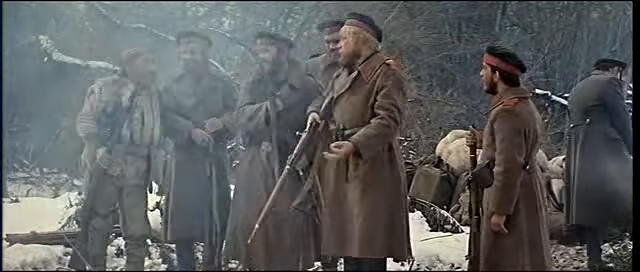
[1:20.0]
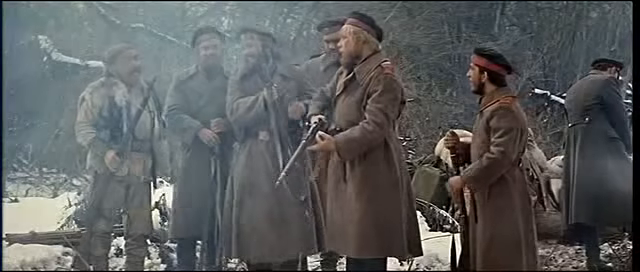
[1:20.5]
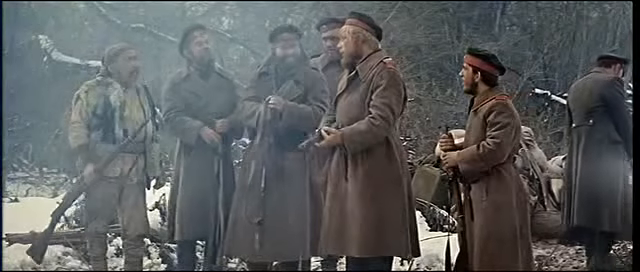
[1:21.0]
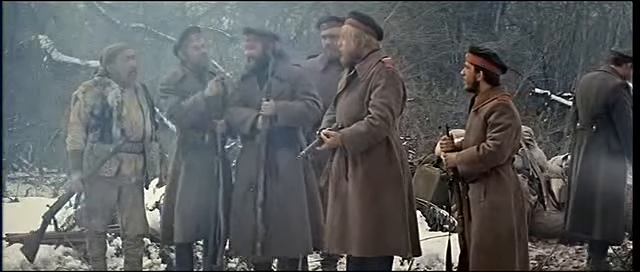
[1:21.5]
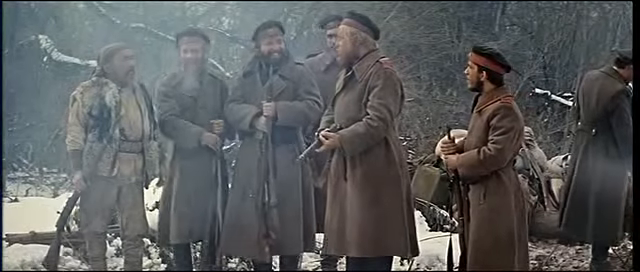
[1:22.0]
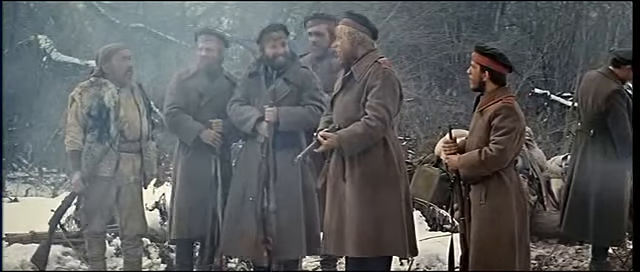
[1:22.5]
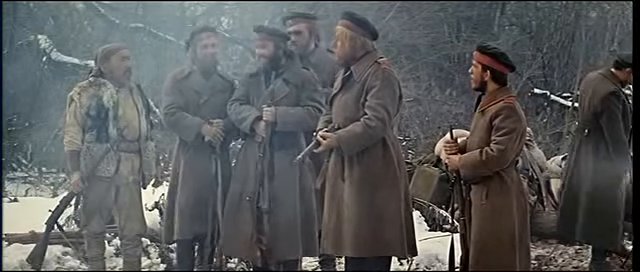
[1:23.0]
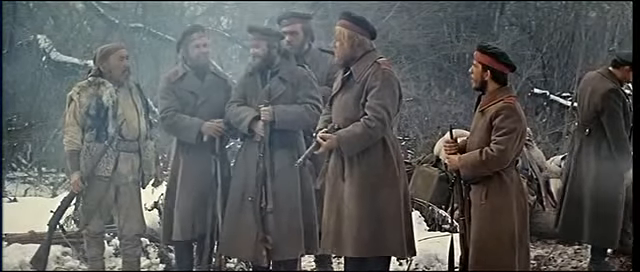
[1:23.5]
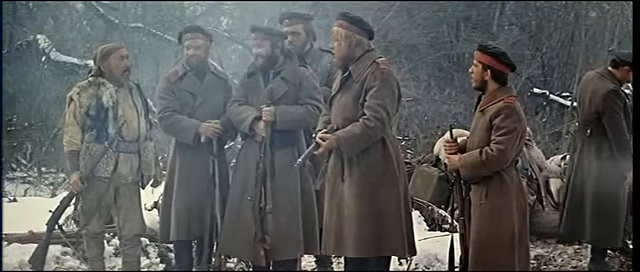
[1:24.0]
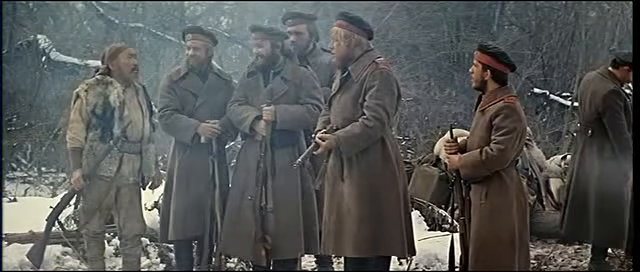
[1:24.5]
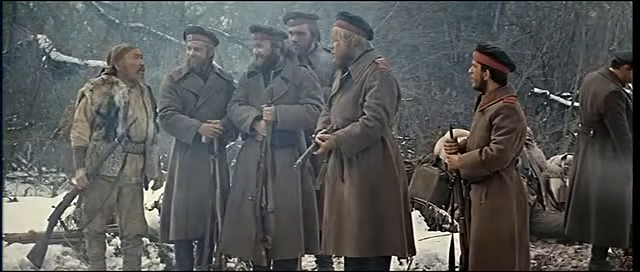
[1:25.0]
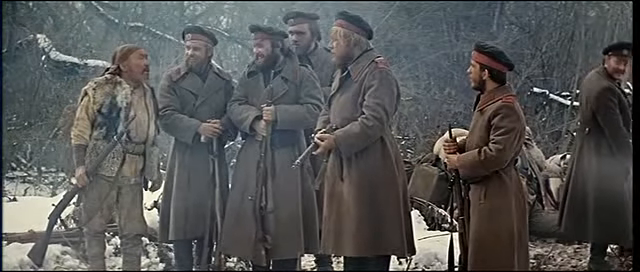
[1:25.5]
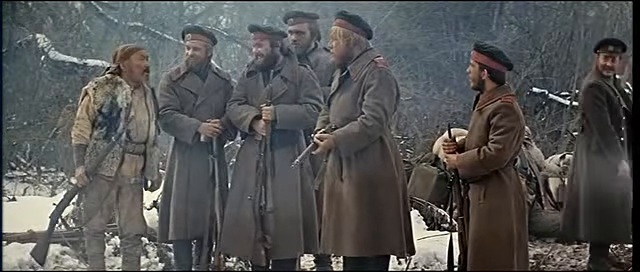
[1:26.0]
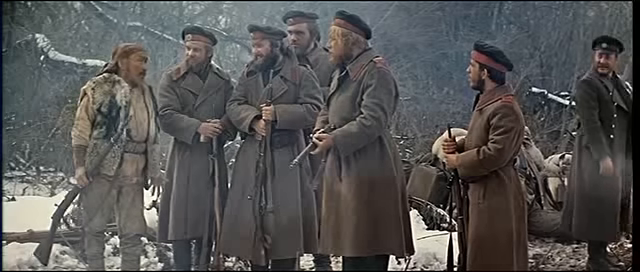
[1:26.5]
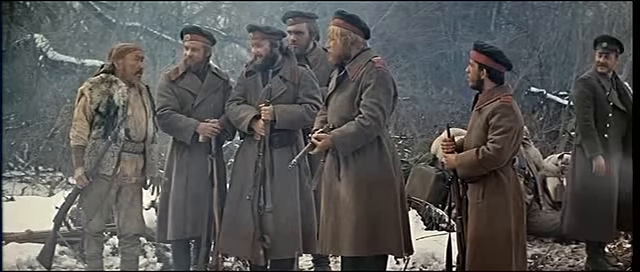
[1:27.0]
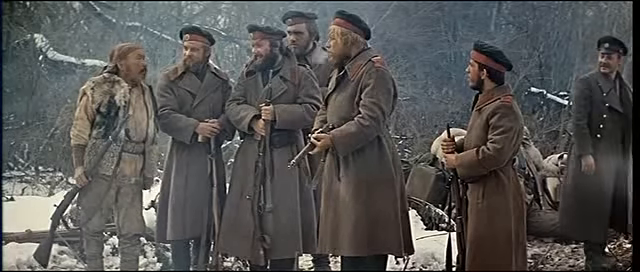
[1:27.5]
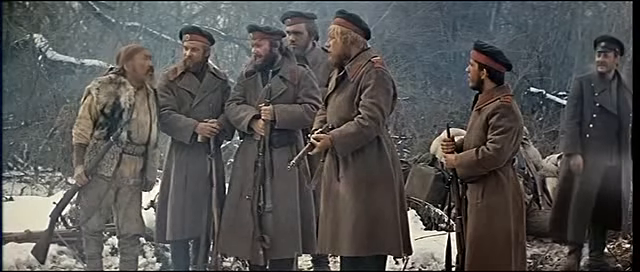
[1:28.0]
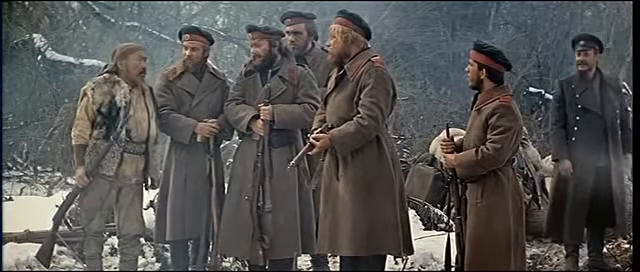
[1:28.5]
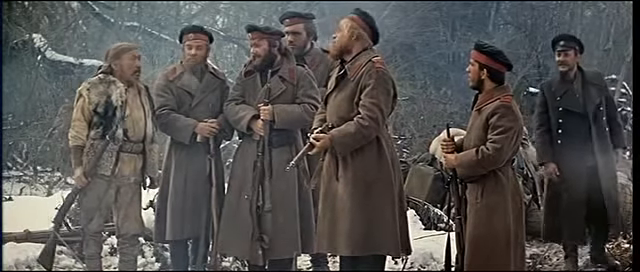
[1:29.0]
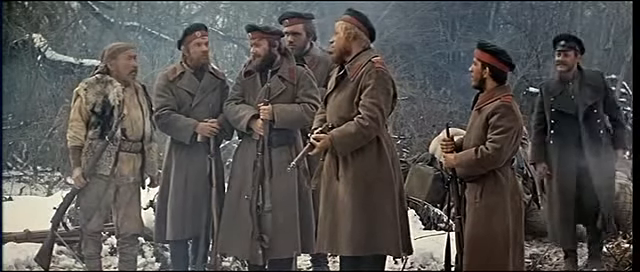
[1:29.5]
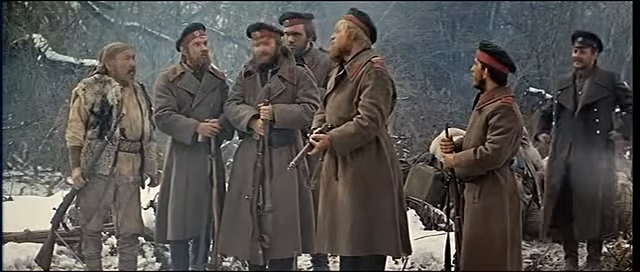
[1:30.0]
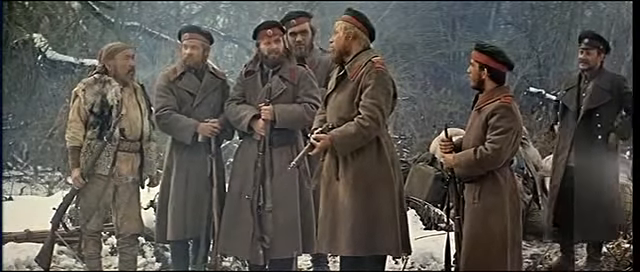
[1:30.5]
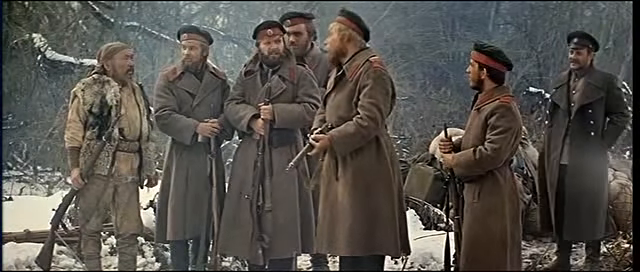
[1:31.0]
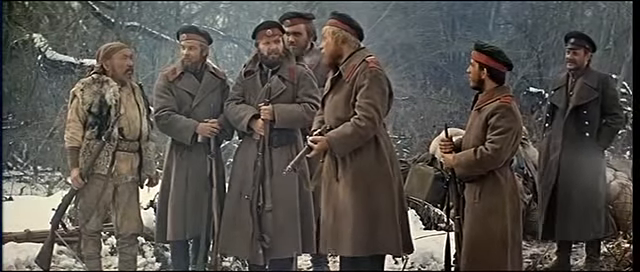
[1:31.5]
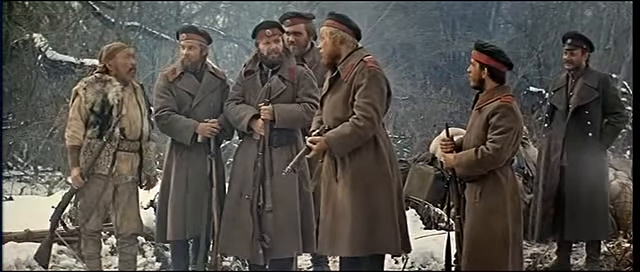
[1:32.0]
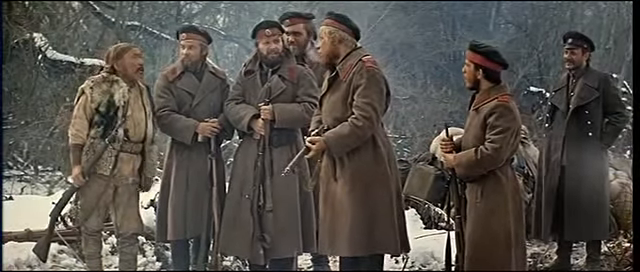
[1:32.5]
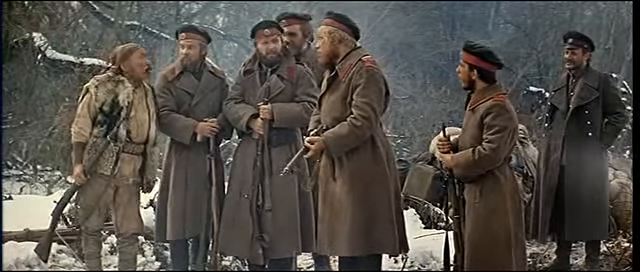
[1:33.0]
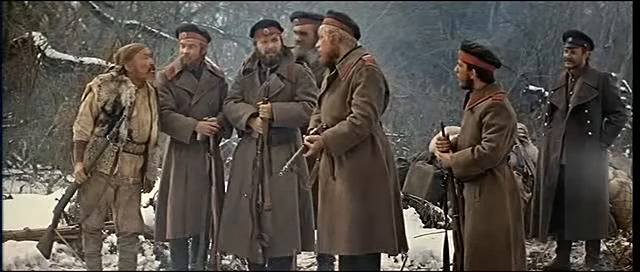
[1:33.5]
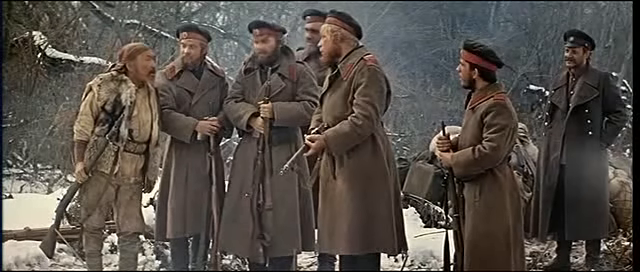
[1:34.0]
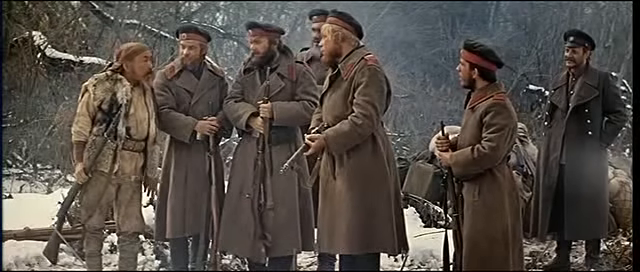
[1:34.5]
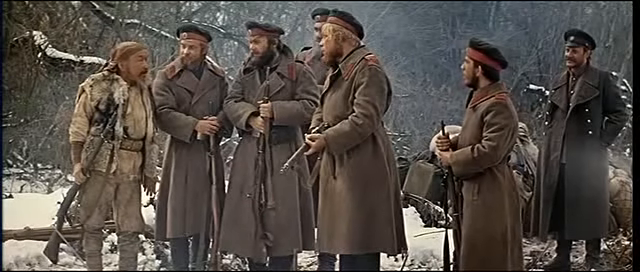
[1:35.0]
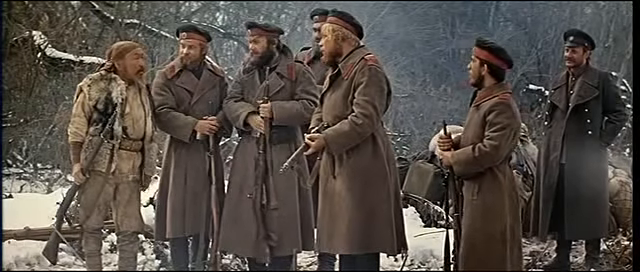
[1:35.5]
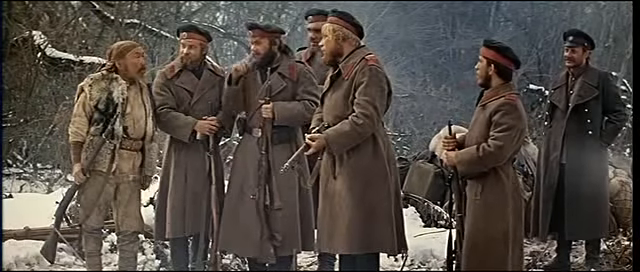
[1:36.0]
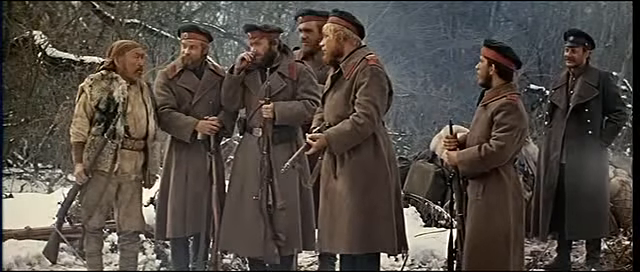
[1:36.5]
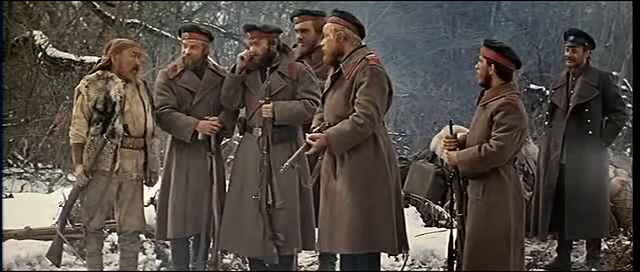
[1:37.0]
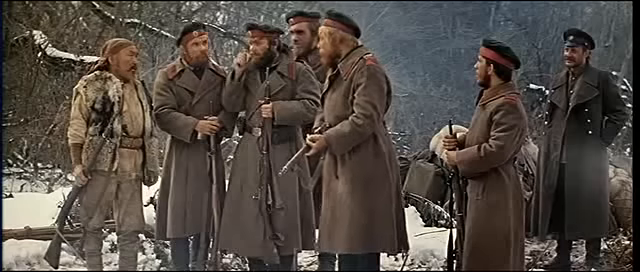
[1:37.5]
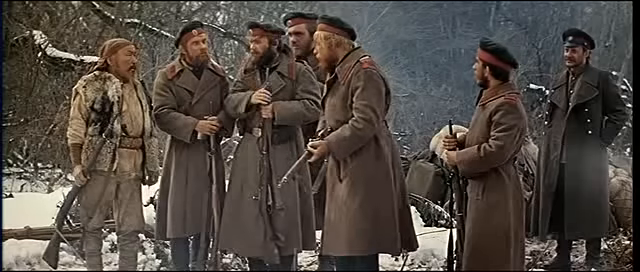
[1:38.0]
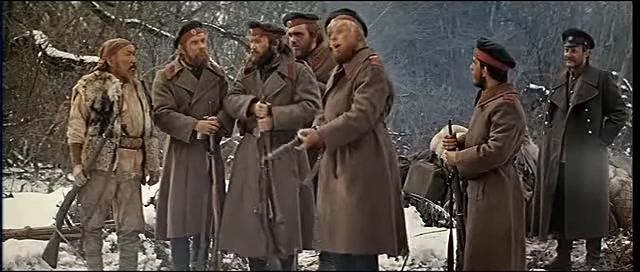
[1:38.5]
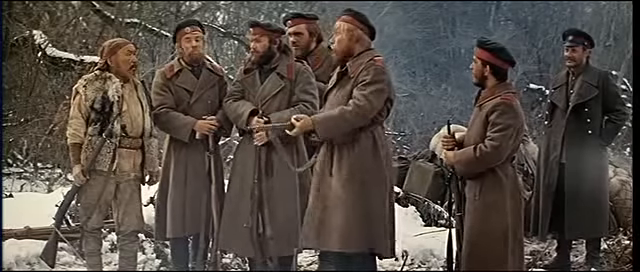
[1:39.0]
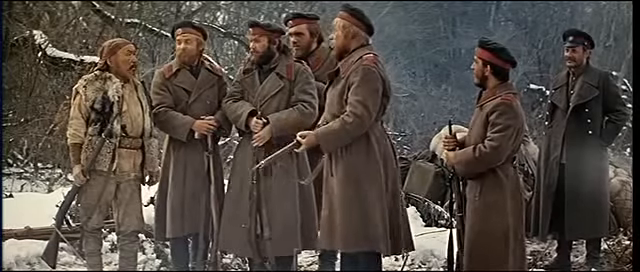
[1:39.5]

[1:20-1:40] The shot stays on the Asian man with the group of five uniformed men, while the uniformed man who came with him is still in the back. The uniformed men seem to be laughing among themselves and talking to the Asian man, who seems to reply calmly. He wears what looks like a skinned-animal fur coat with no arms, more like a vest, along with tighter pants and a brown cloth wrapped around his head. He has a black mustache and a little beard, shorter than those of most of the uniformed men. The uniformed men mostly hold their weapons vertically; only the man who just shot still holds his slightly horizontally as he talks directly to the Asian man.